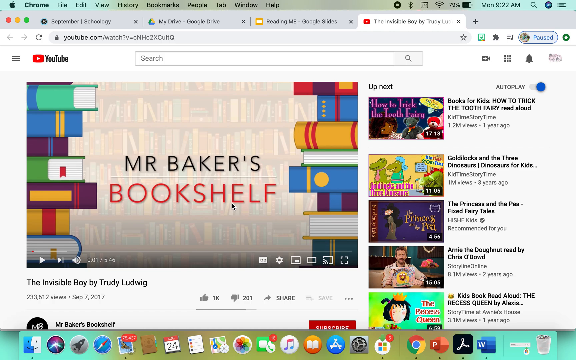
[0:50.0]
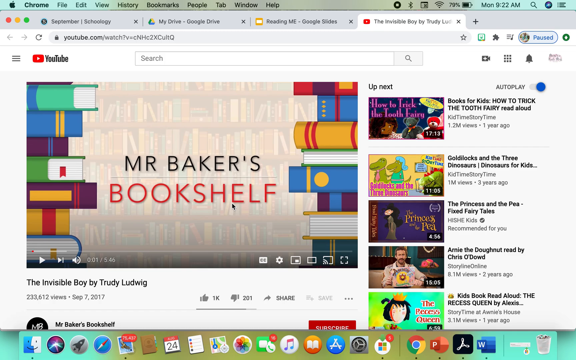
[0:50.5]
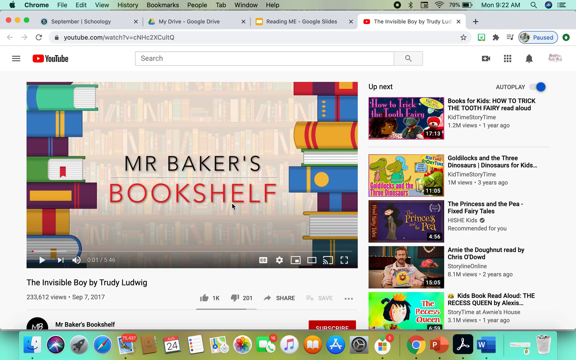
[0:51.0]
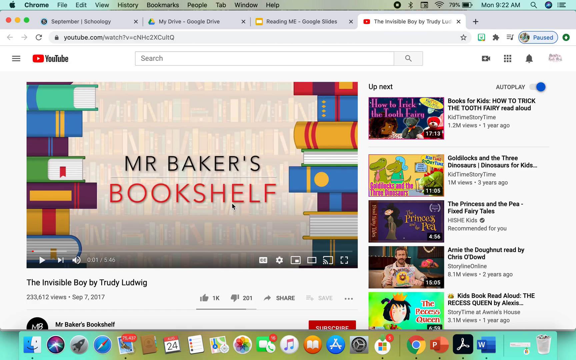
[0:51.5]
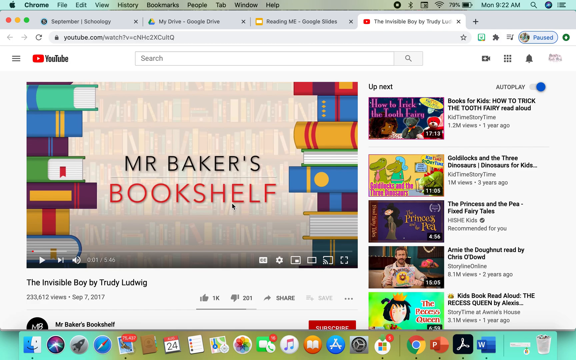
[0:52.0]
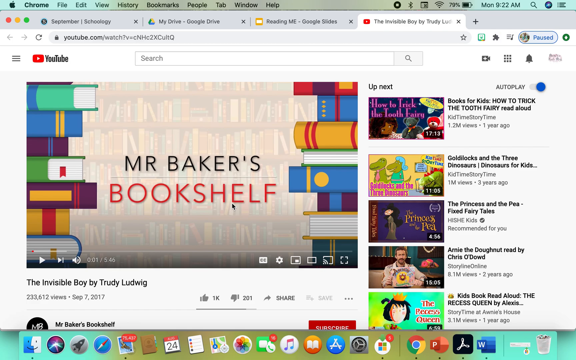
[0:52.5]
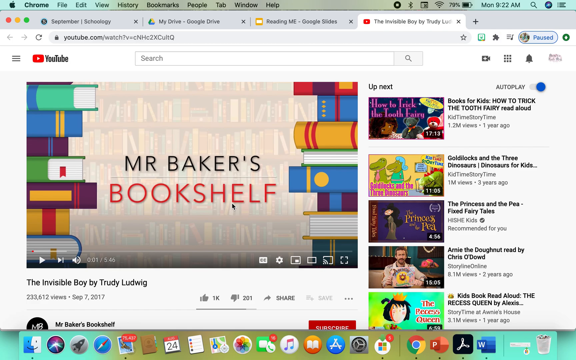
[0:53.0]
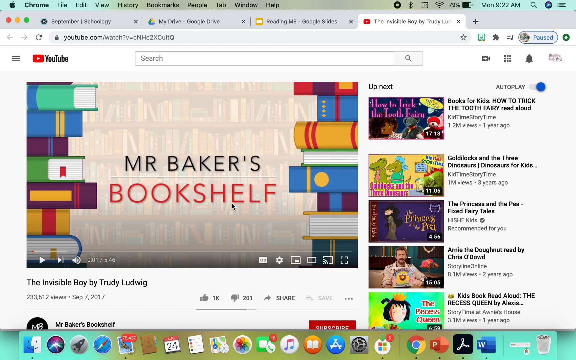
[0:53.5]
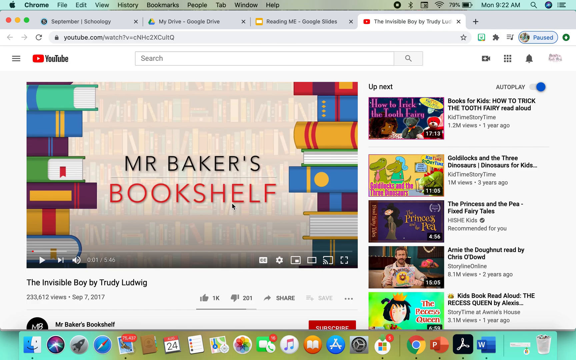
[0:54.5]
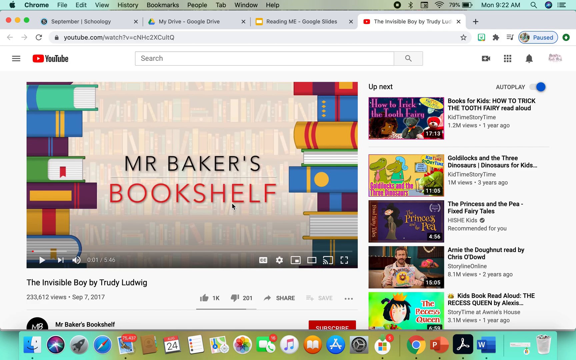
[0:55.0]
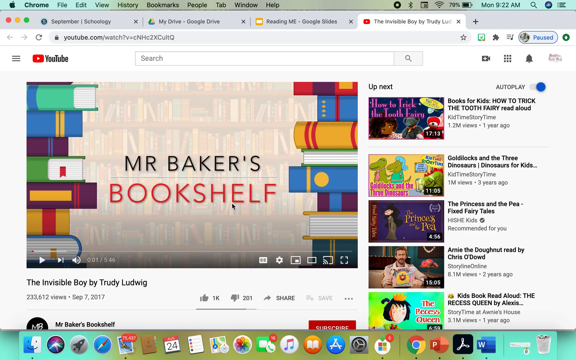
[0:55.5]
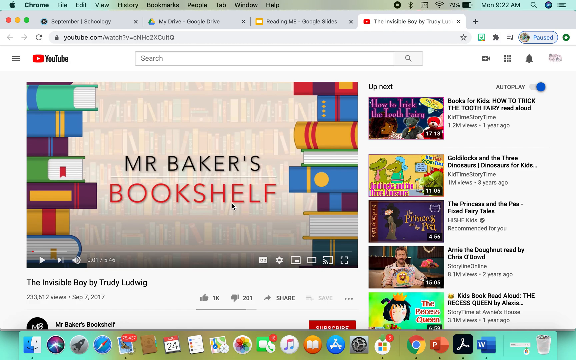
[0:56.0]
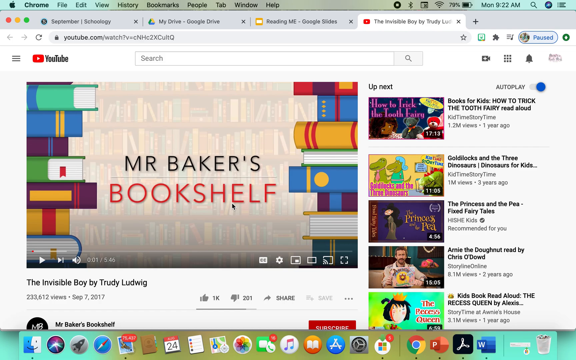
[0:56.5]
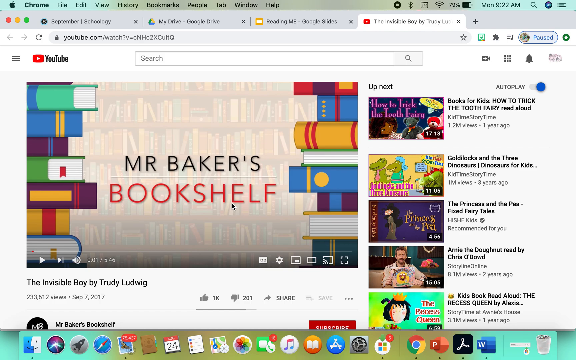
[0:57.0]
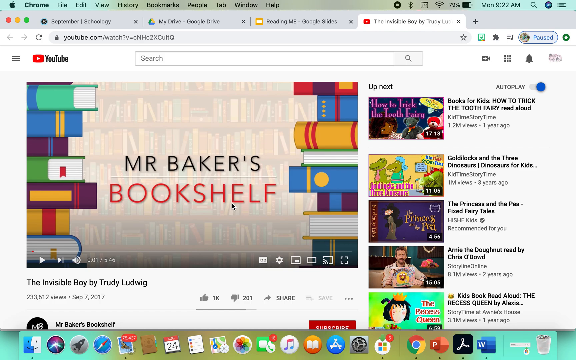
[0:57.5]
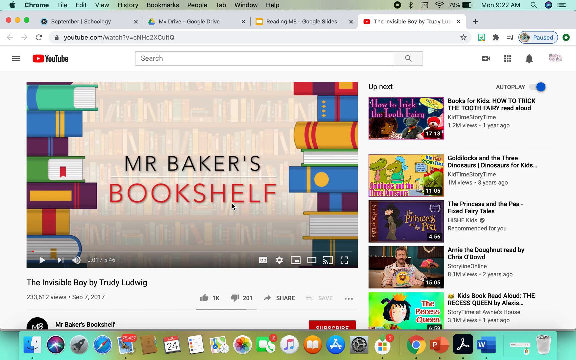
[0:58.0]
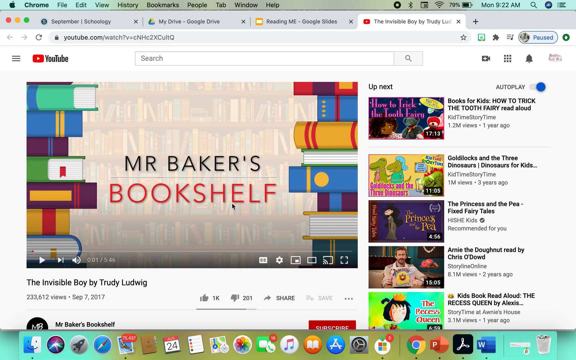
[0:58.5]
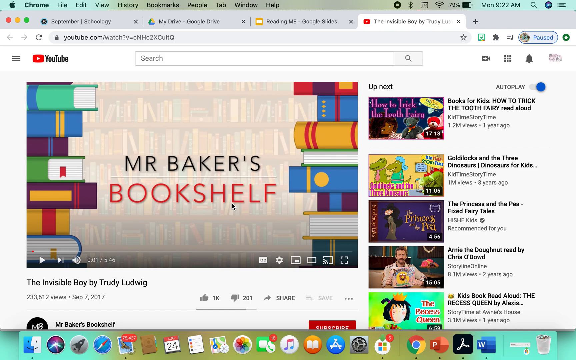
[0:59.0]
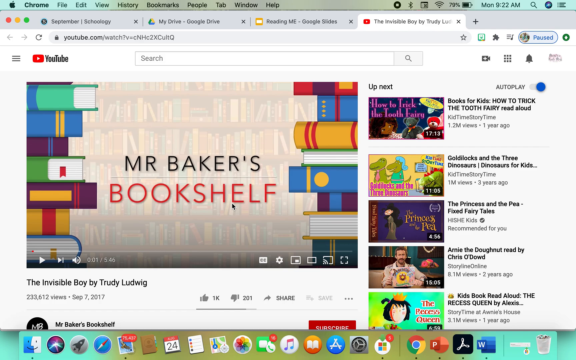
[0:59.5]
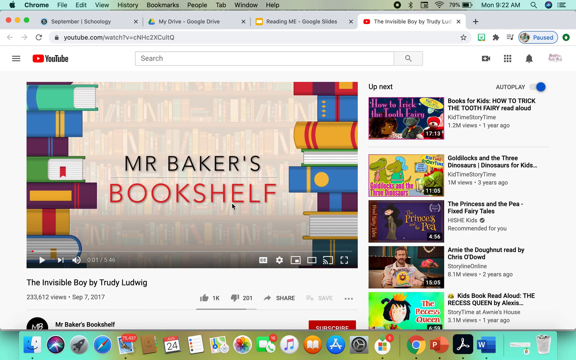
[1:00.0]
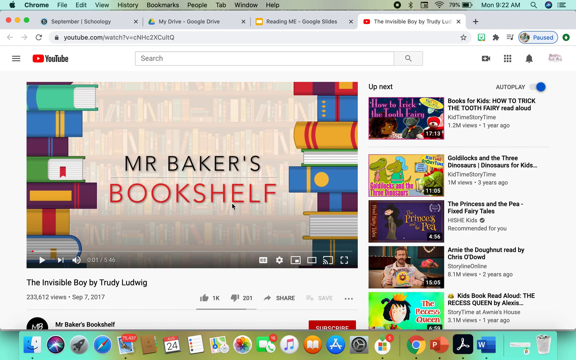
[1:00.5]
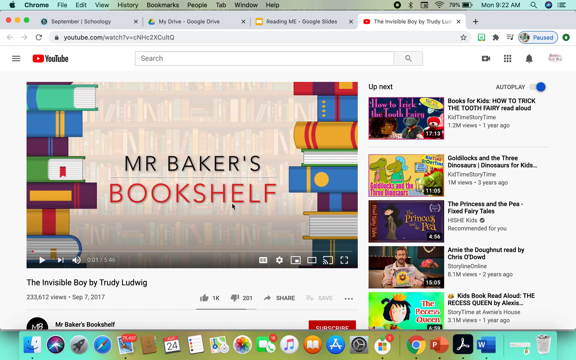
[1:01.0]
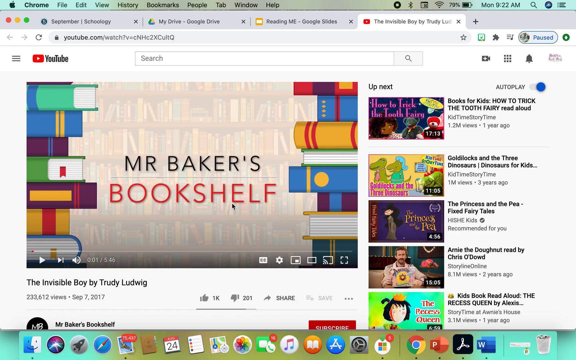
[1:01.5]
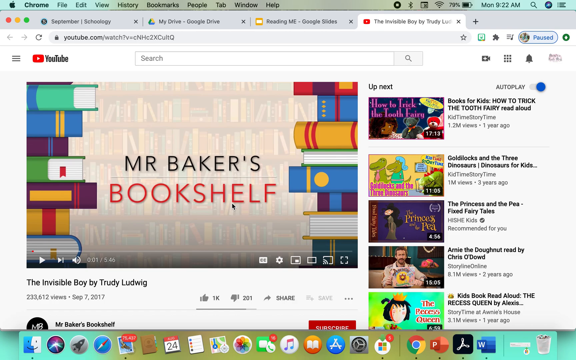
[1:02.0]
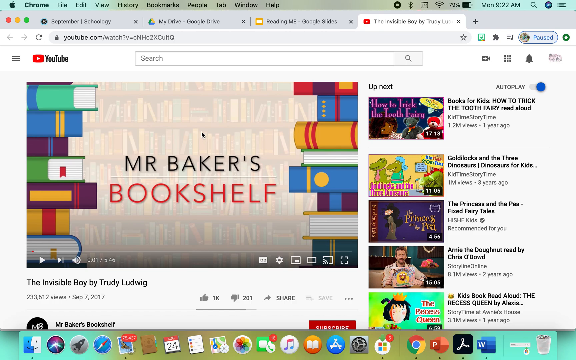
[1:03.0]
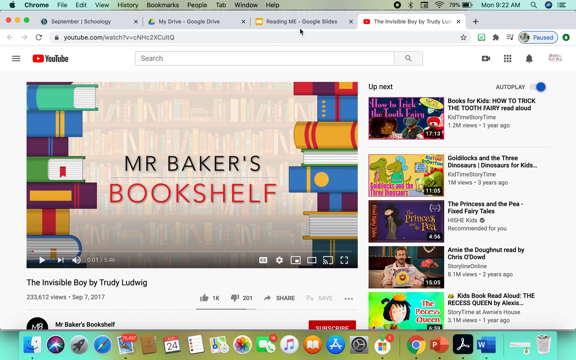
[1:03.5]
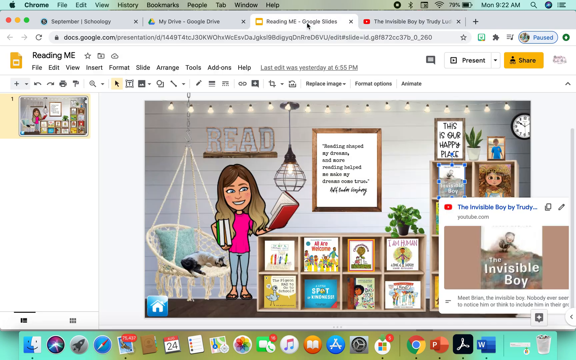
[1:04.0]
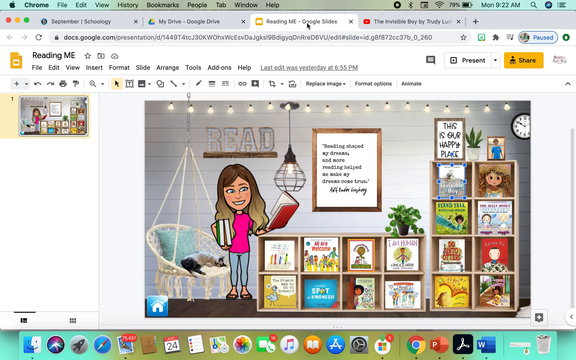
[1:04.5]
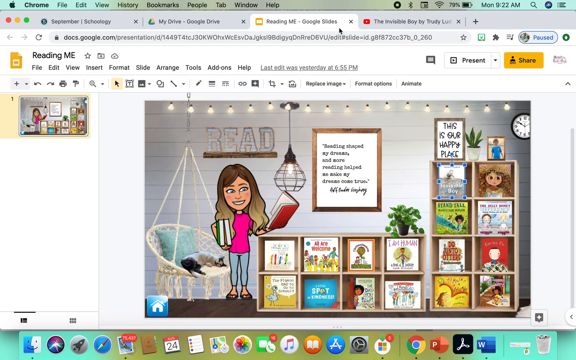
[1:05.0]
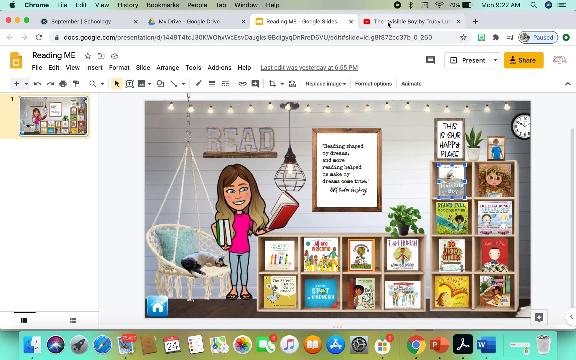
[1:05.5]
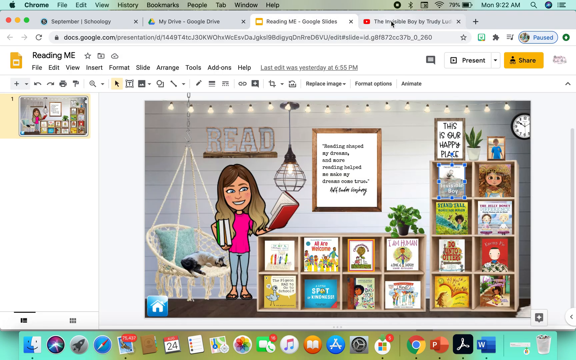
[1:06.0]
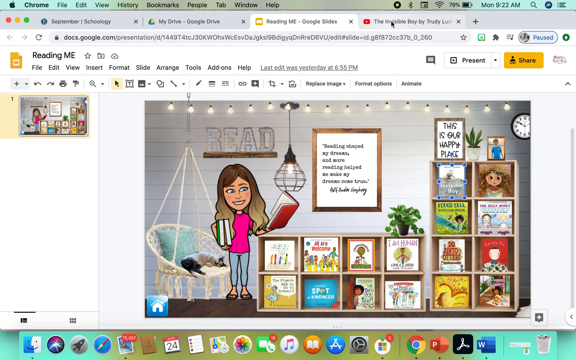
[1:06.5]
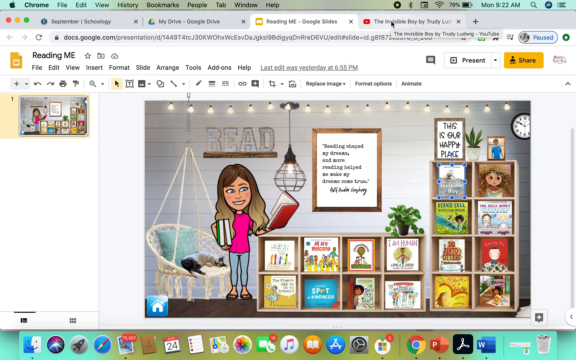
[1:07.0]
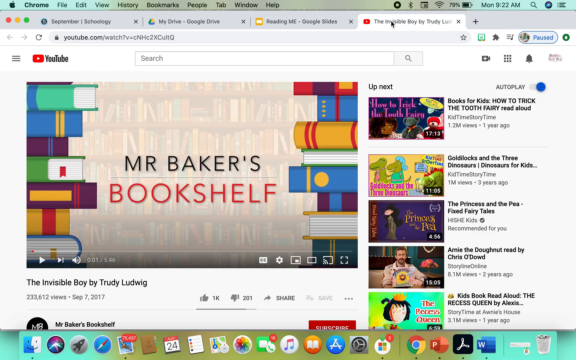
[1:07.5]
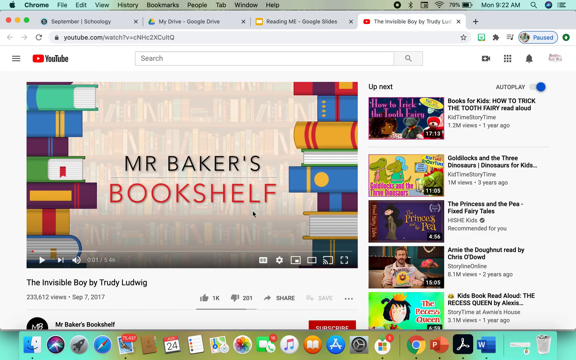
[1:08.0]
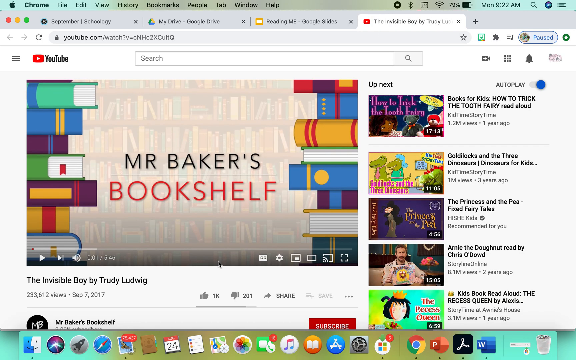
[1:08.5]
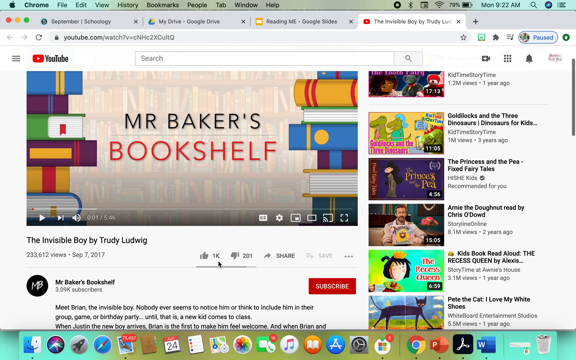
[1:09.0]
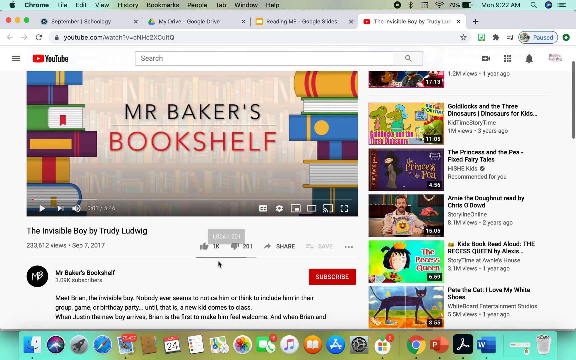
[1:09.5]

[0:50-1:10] The user stays on the Mr. Baker's Bookshelf YouTube page without clicking on the video. They hover over the tabs and click the third tab, Google Slides, titled "Reading Me." It shows the slide with a teenage girl standing next to two cube shelves full of books. After a few seconds, the user returns to the YouTube tab, scrolls down, and clicks the Share button. The YouTube page shows the video has 1,000 likes and 201 downvotes, the channel has a total of 3,000 subscribers, and the video was posted on September 7, 2017, with 233,612 views.